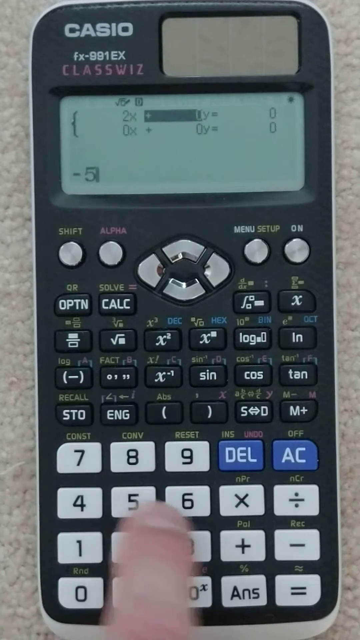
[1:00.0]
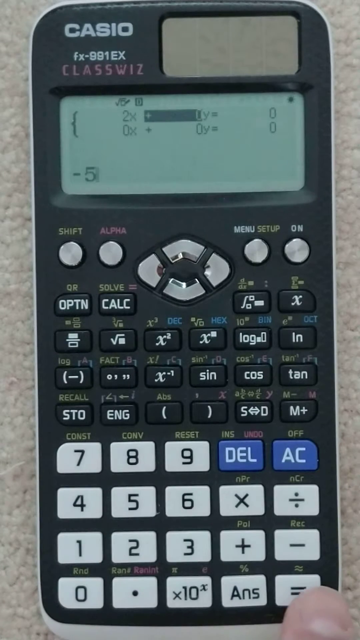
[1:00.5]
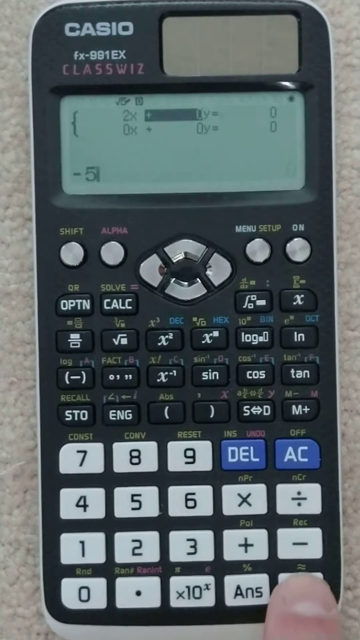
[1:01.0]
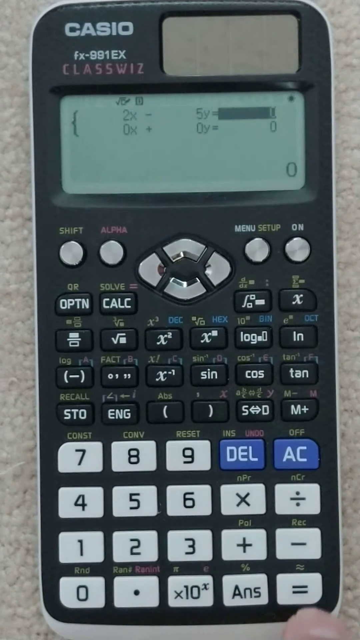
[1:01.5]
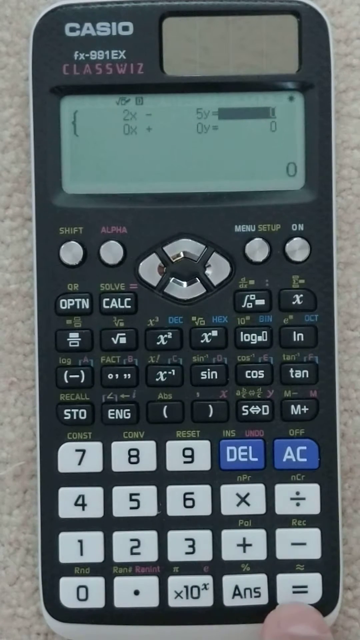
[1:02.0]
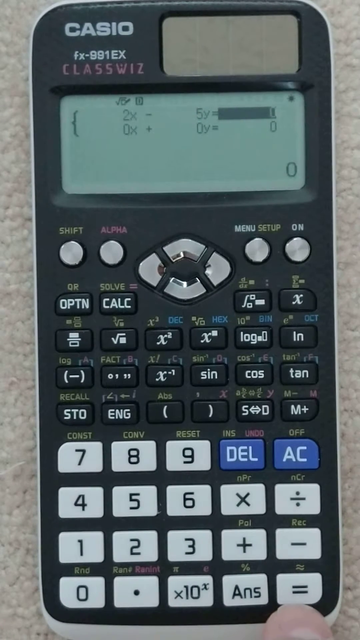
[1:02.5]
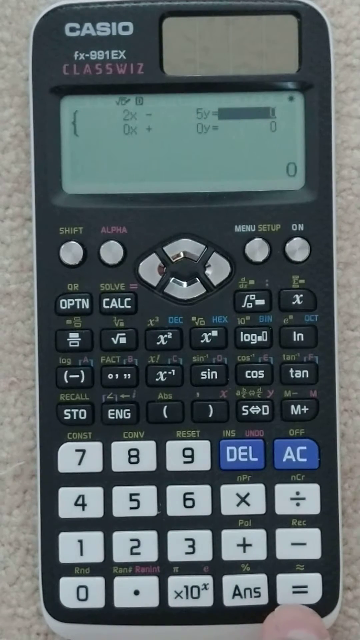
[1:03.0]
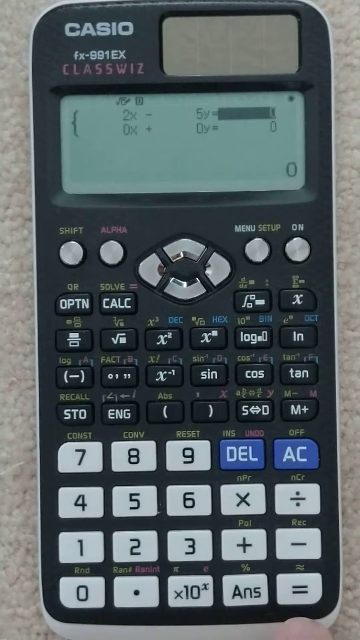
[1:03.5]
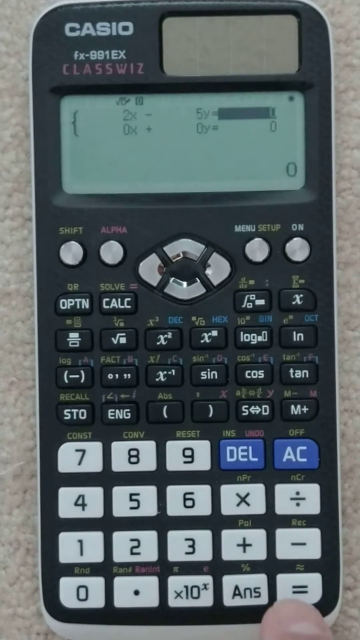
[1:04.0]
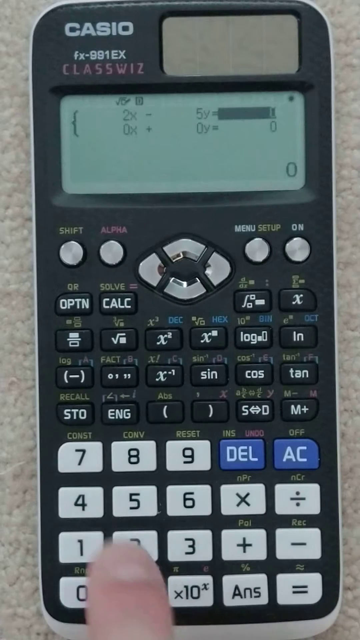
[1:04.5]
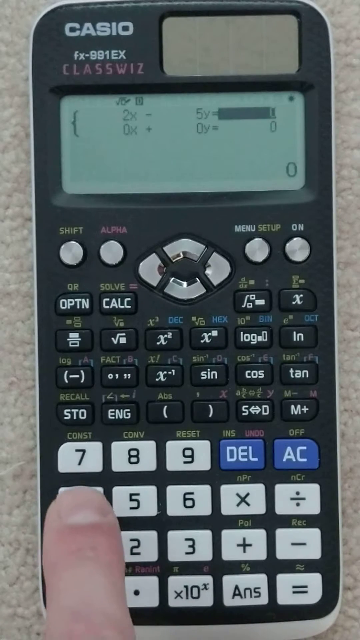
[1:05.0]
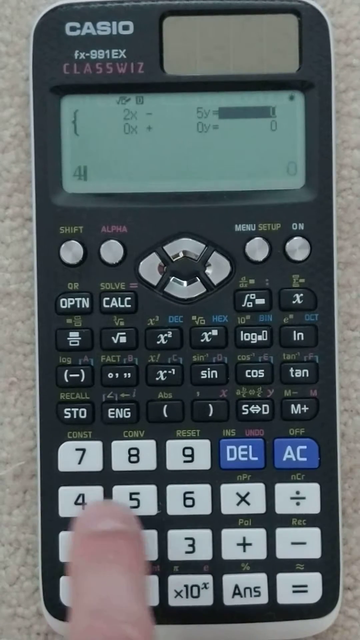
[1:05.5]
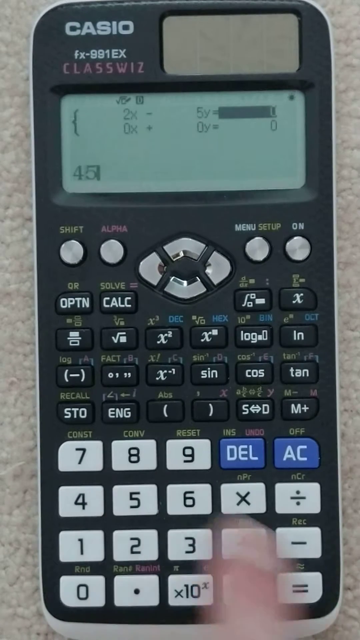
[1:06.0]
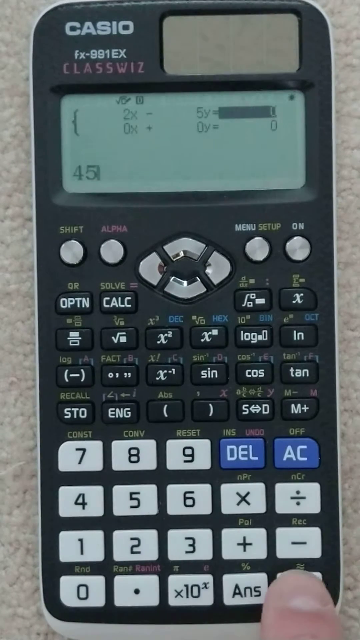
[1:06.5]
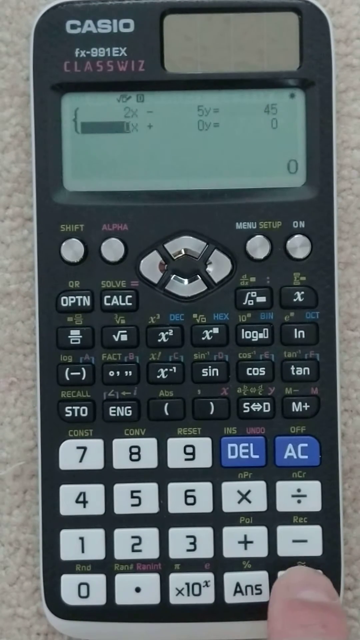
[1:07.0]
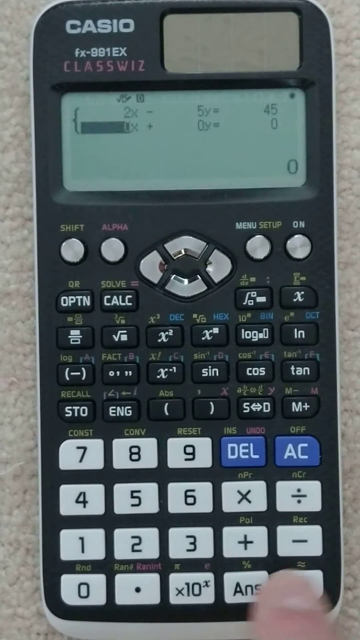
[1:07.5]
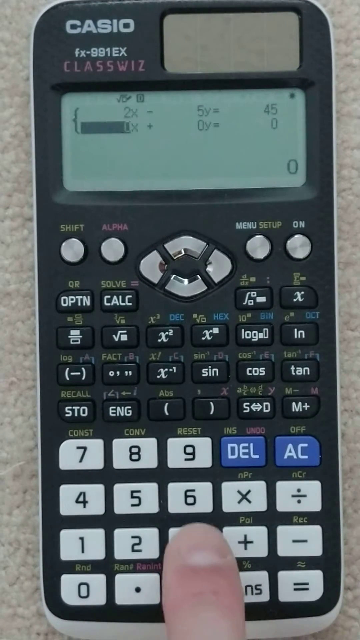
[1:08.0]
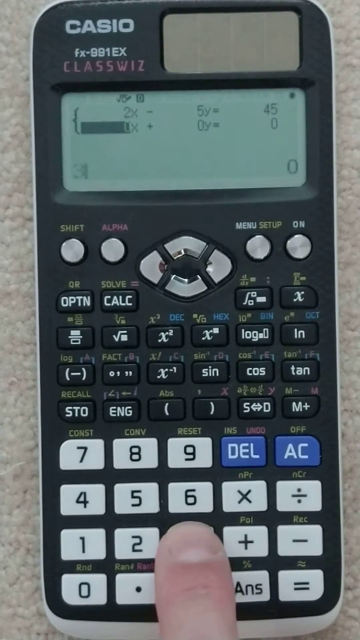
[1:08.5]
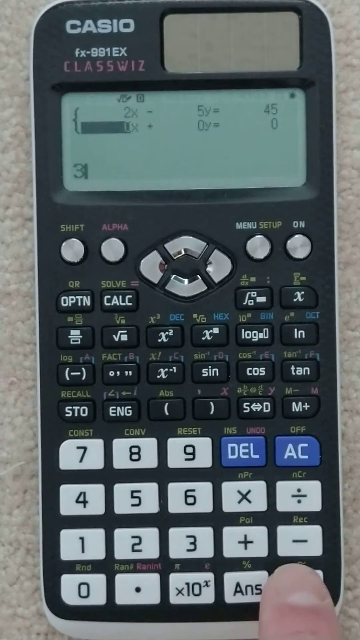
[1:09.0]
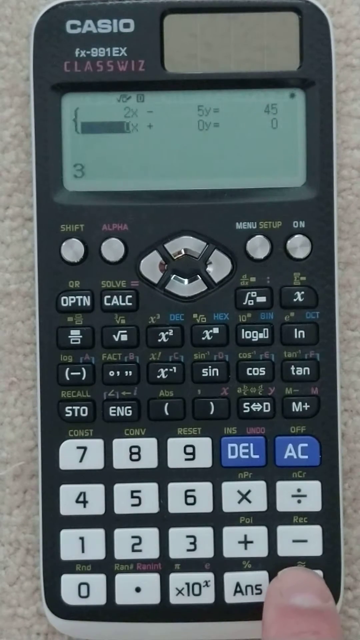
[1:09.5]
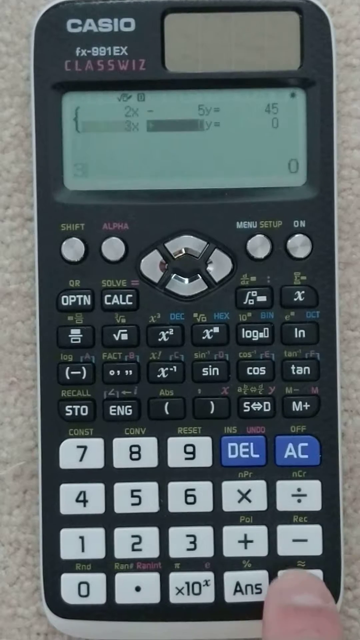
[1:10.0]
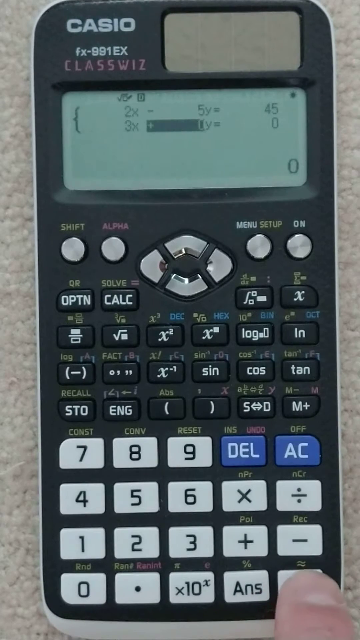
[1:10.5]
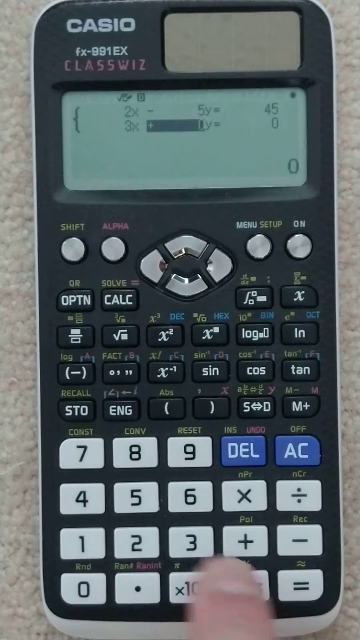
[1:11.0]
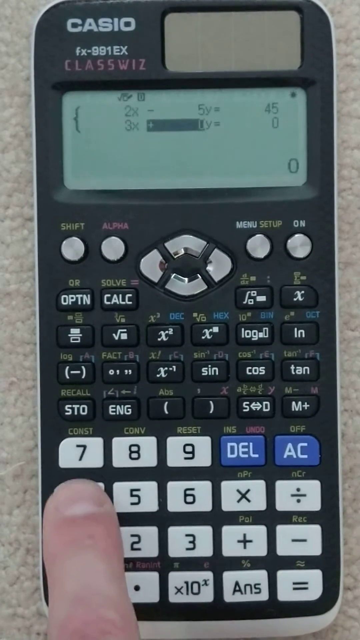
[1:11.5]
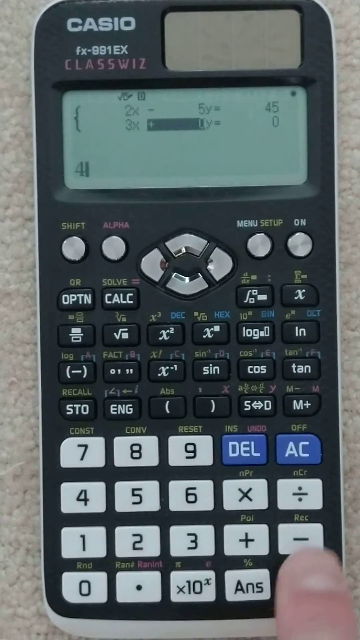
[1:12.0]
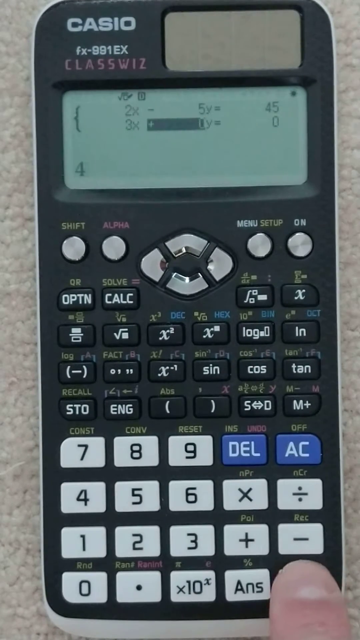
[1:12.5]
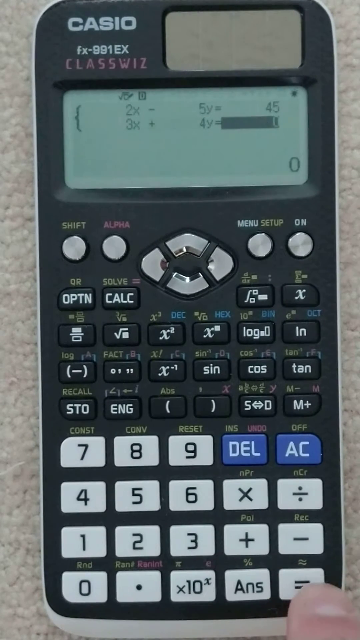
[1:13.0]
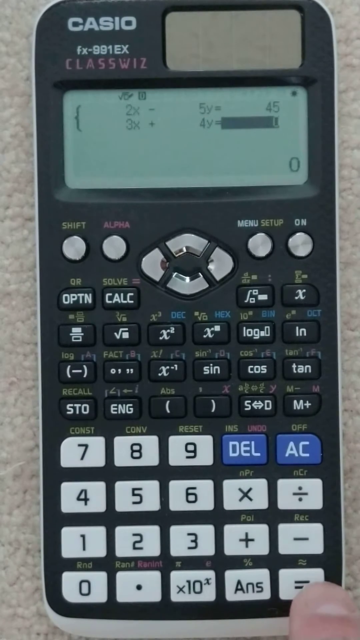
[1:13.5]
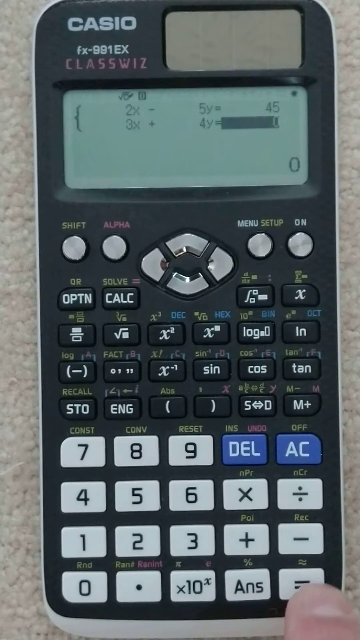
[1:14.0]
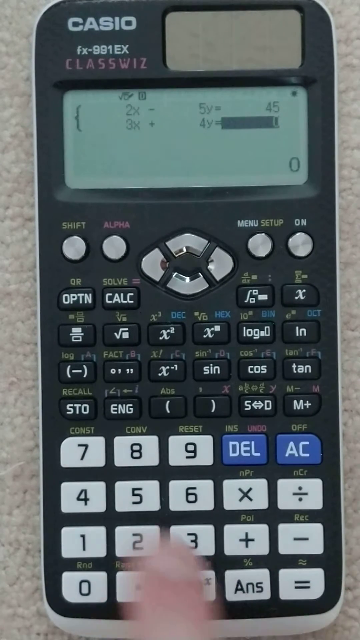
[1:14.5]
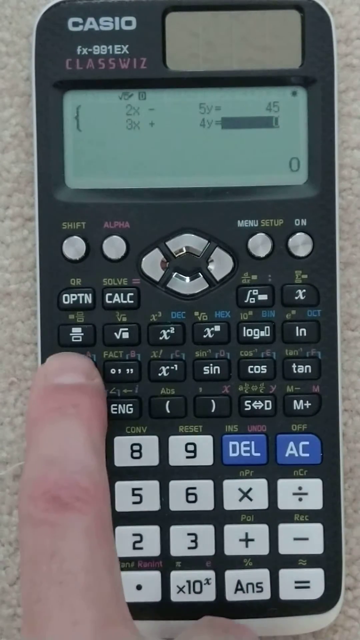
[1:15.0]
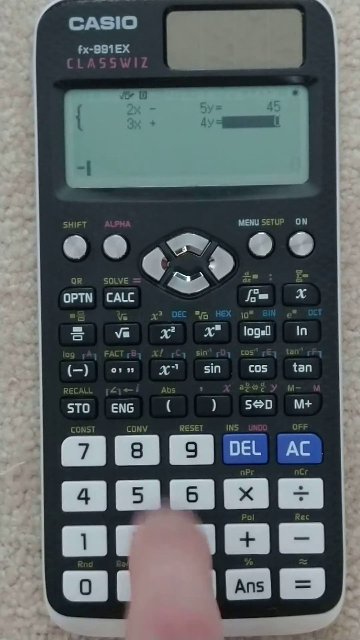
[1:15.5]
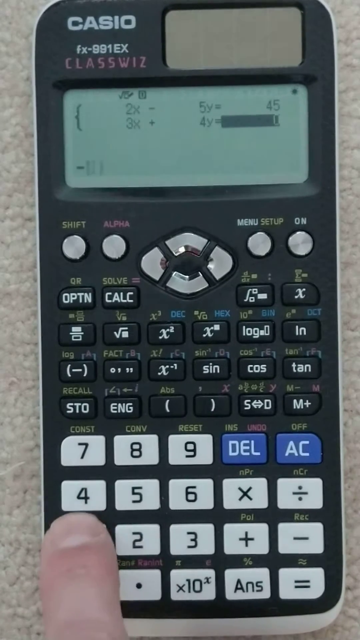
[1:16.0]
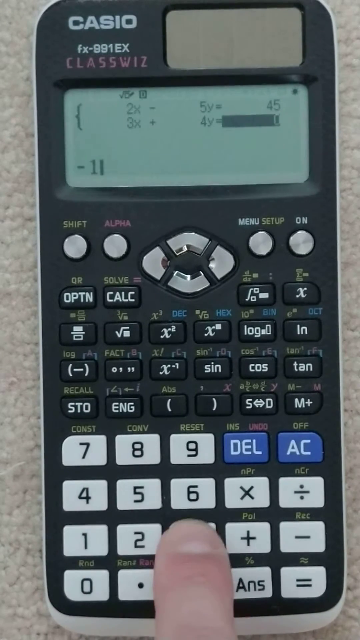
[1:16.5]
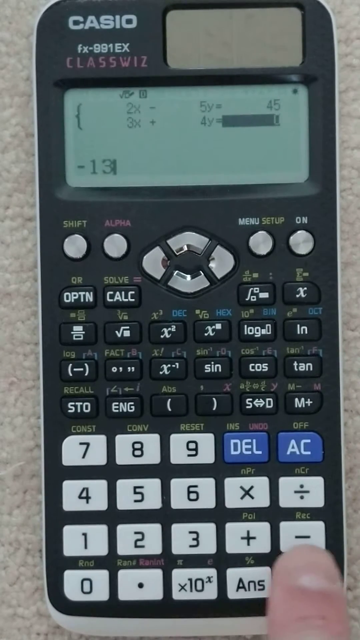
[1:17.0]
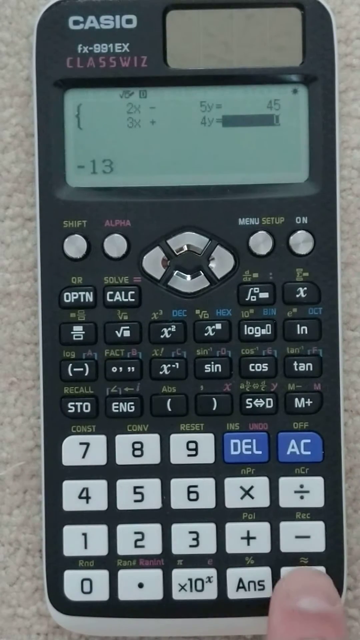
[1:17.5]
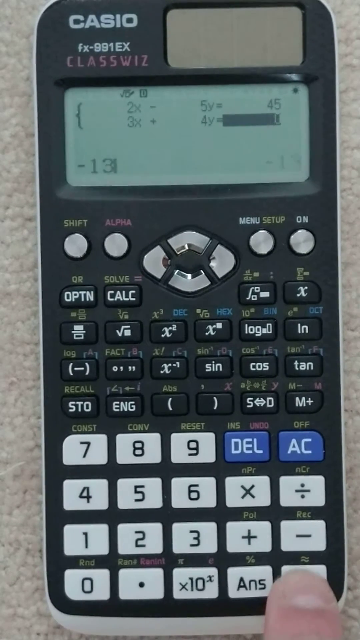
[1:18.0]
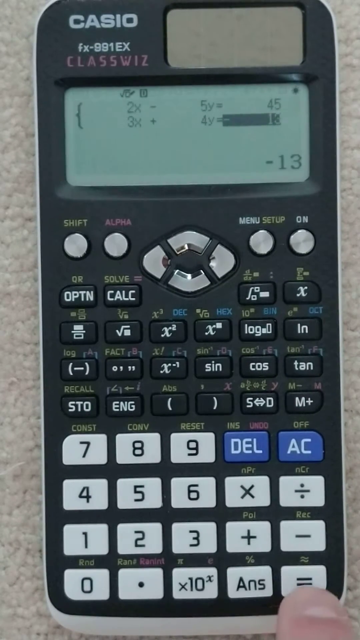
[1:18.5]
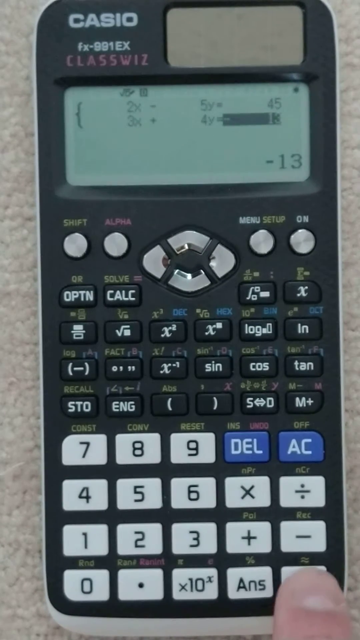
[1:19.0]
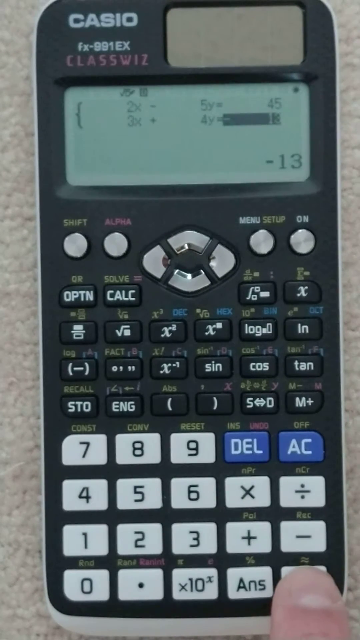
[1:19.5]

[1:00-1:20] The user continues entering data, and the Casio Classwiz screen reacts, with the data structured in columns and rows. The steps of the formulas and the mathematical operations are shown, and then −5 is left on the last line of the Casio Classwiz FX-991EX screen. The calculator is on a plush, soft surface like a carpet of sorts, with a fluffy texture of a greyish beige colour. The user presses the calculator's keys with a finger to input the data.